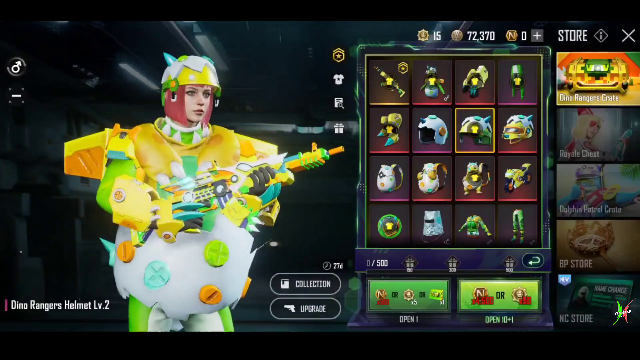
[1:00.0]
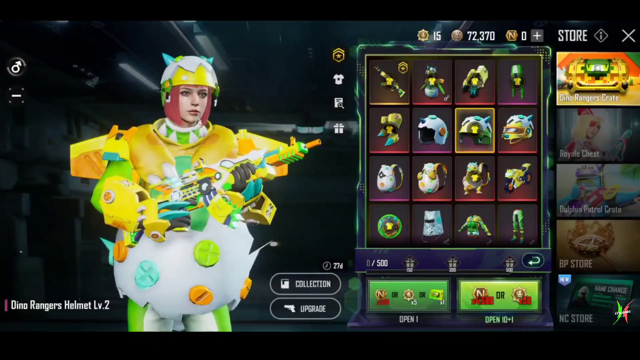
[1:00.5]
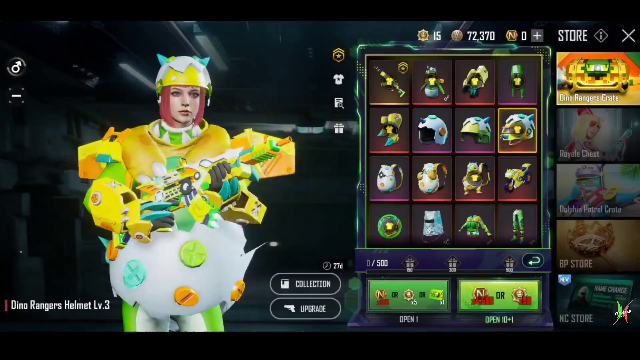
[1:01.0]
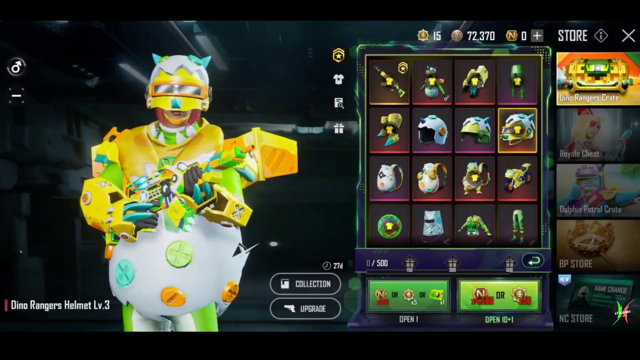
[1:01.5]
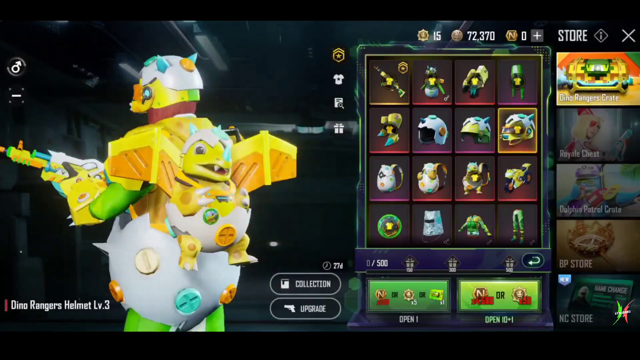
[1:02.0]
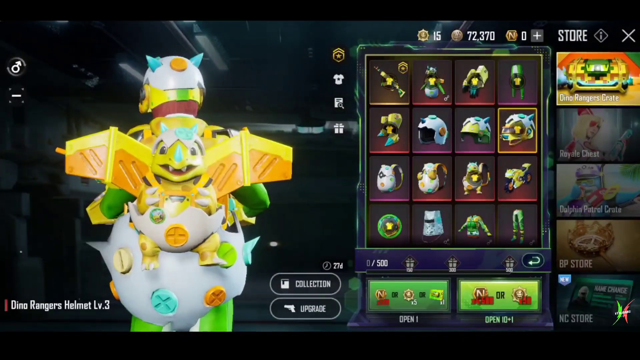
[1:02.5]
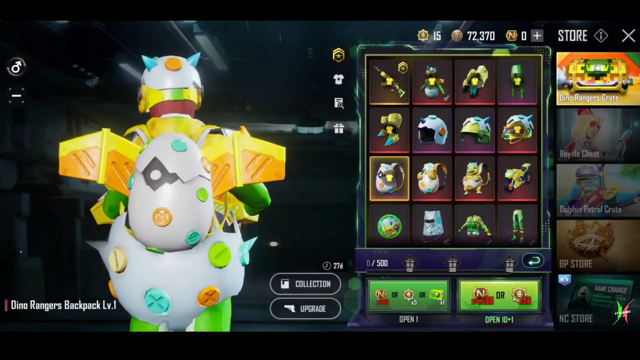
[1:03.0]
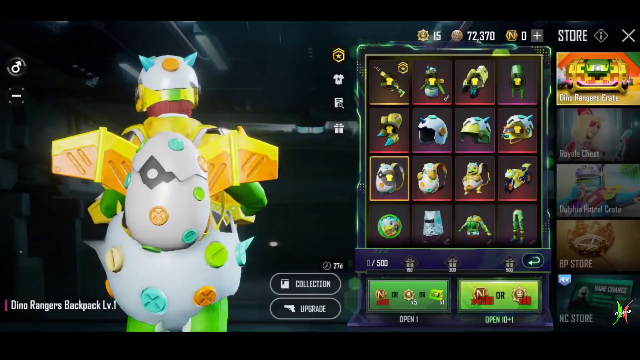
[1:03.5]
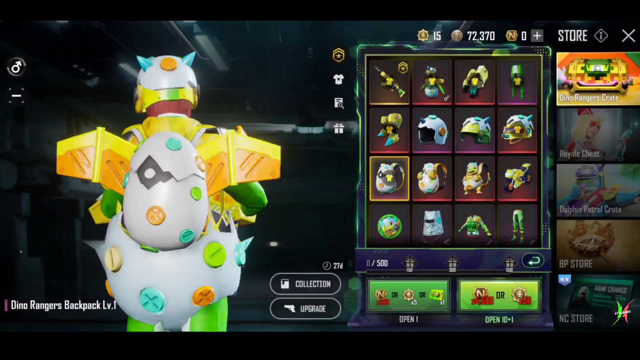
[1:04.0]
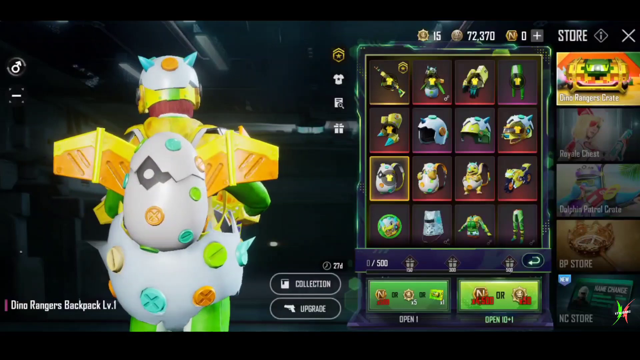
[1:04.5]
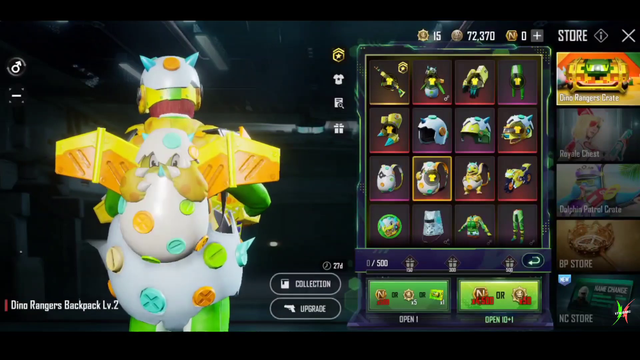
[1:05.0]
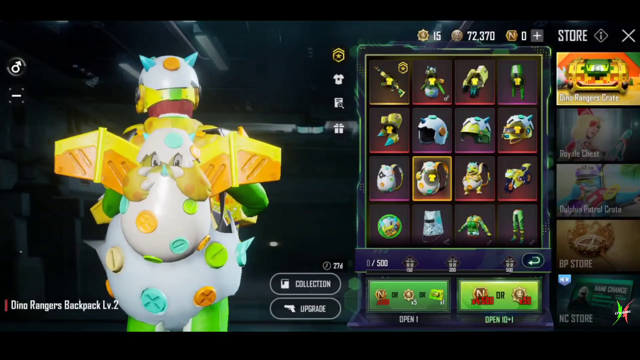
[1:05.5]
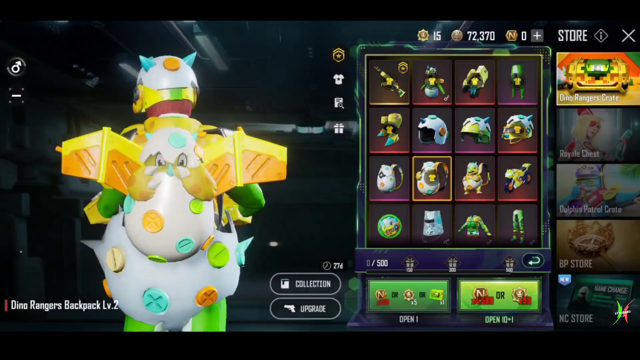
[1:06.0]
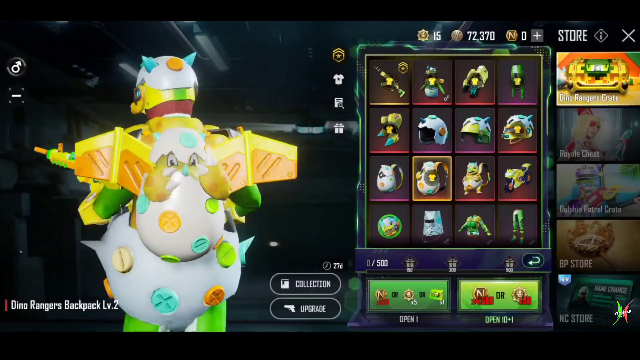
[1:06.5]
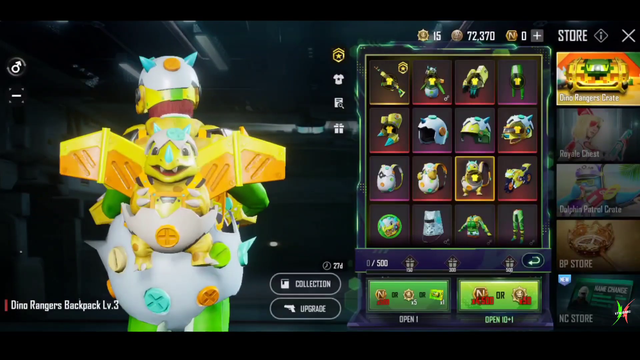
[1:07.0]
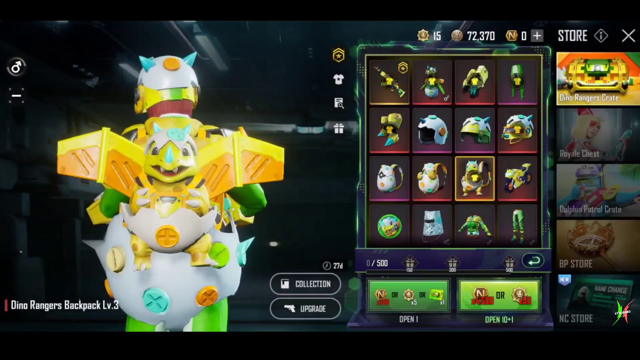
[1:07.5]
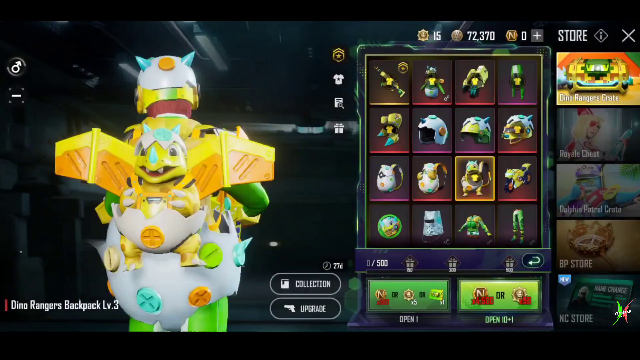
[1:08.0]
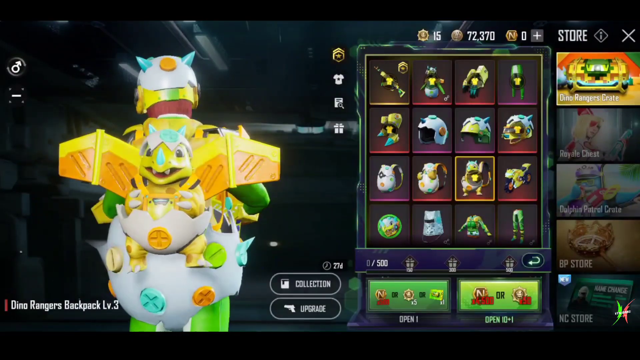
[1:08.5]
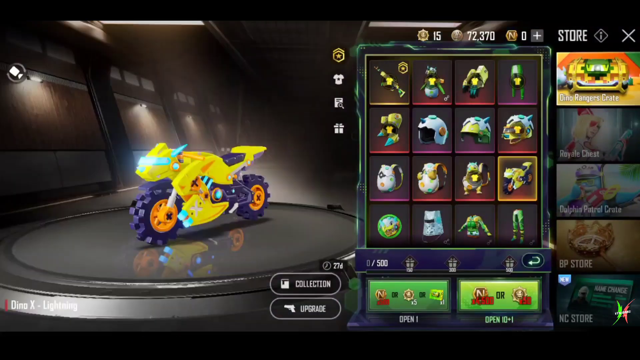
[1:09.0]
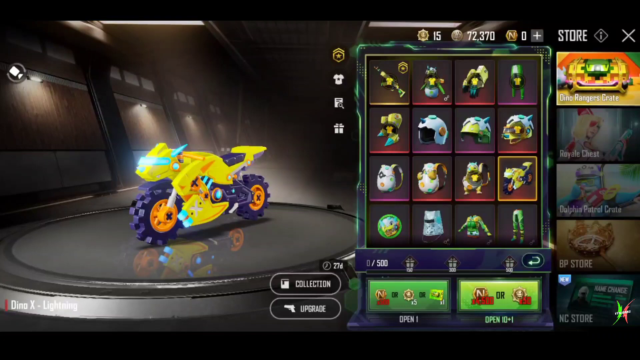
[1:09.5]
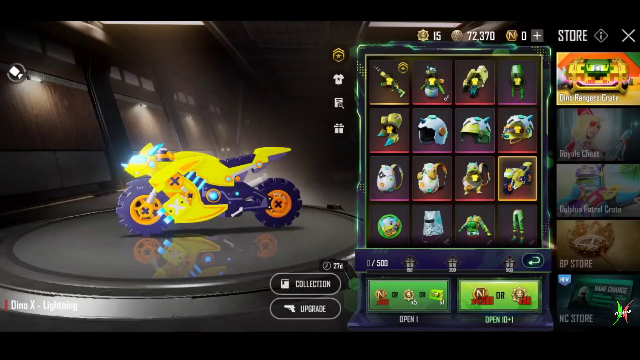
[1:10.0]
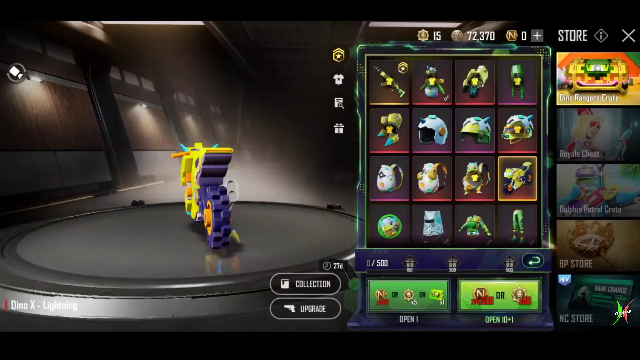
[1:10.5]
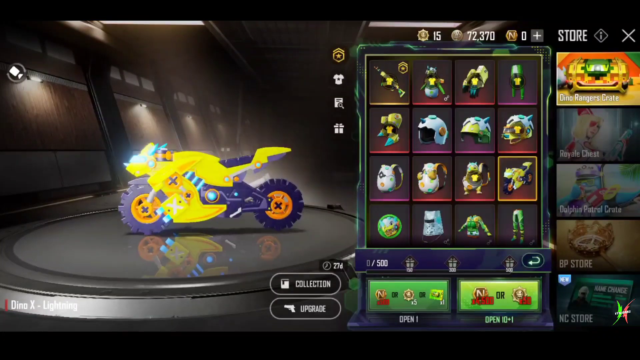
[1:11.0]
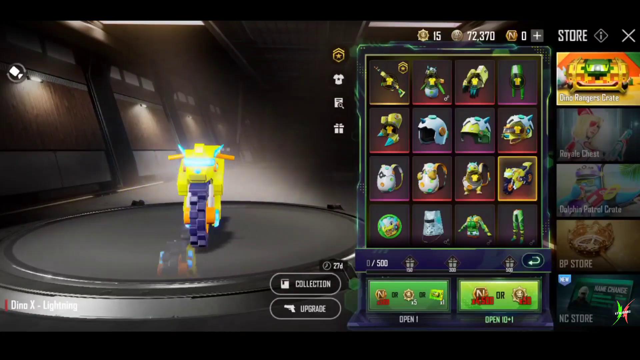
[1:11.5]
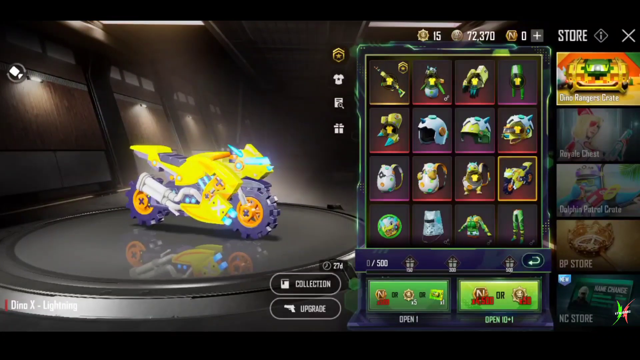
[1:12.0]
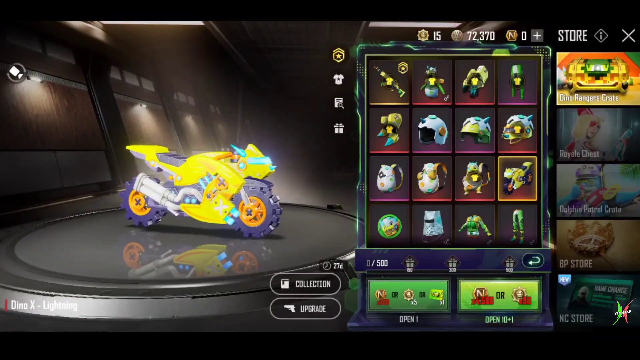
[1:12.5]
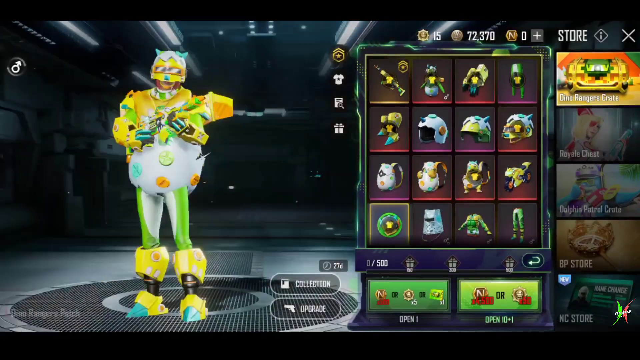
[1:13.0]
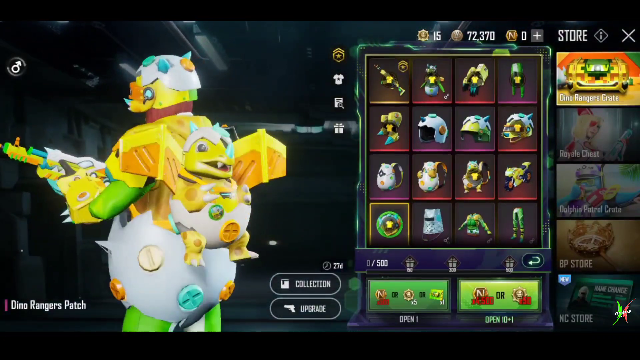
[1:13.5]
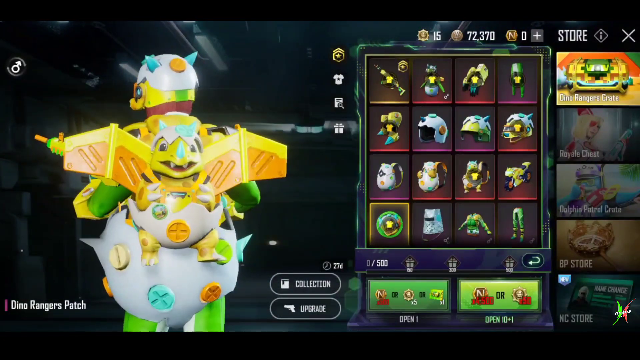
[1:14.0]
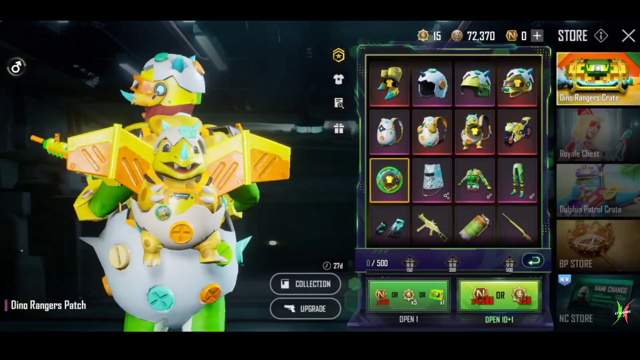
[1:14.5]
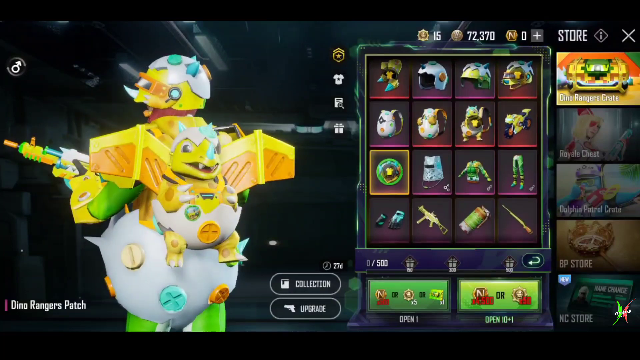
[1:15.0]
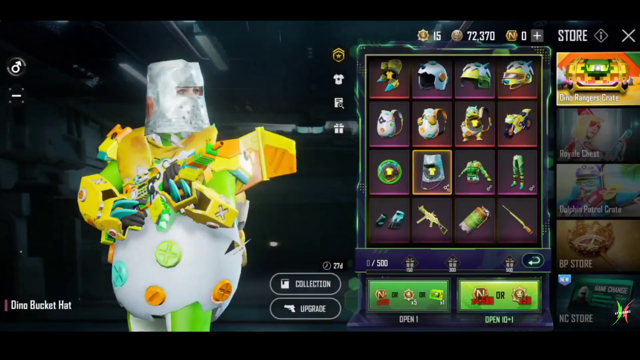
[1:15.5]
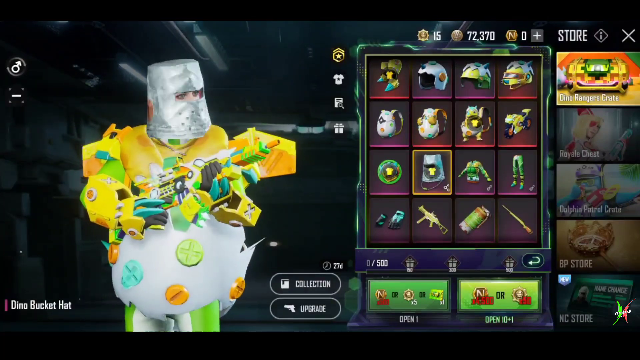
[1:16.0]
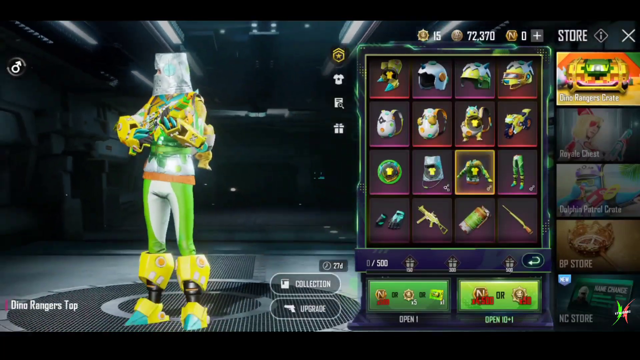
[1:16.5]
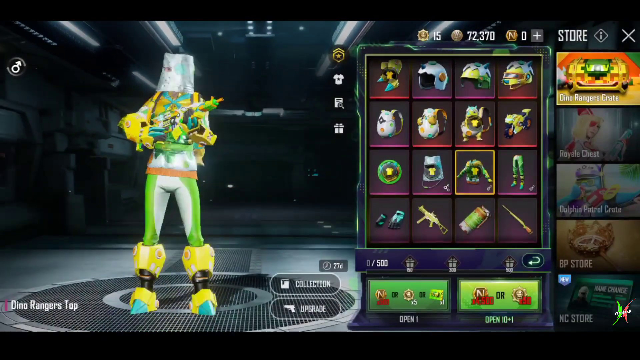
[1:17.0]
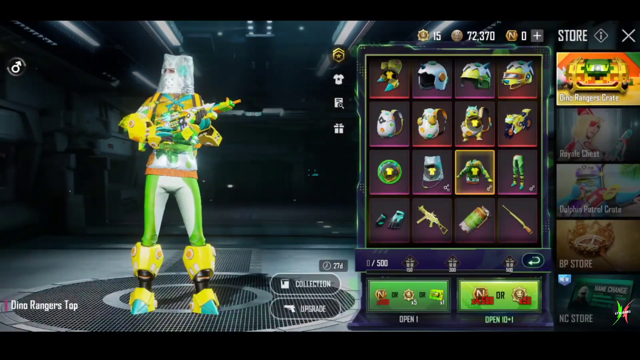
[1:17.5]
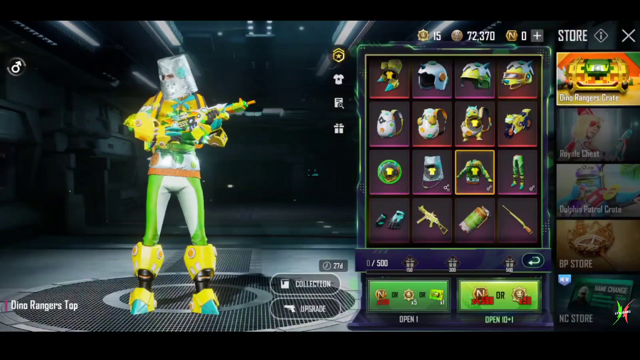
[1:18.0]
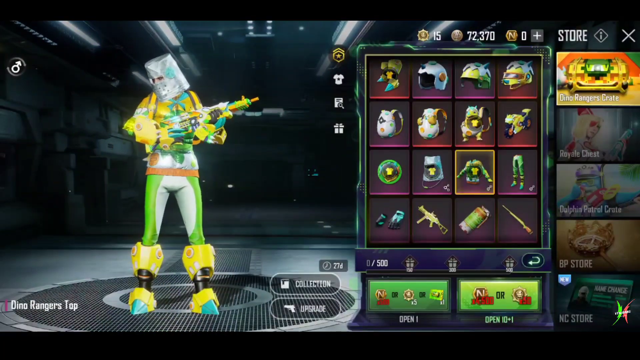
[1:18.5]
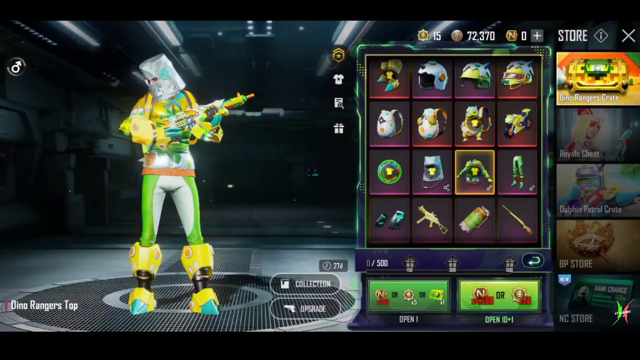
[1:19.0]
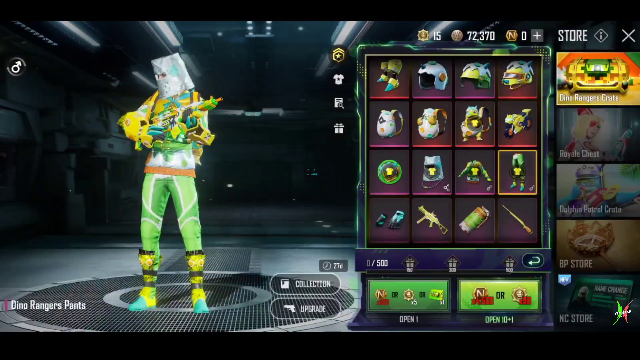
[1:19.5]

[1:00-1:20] The player continues looking at each item. The first backpack is shown, egg-shaped and all white, with what appears to be an eye inside. Buttons run all around the armor plates on the body and the bottom half. There are X-shaped buttons in purple, teal, orange, white and green, and negative signs or pluses in aqua, purple, green, white and orange. Viewed from the individual's back, they are also wearing a helmet. Then what appears to be a motorcycle is shown, with neon-like lights in the front and purple wheels that are almost Lego-like; its body is a mixture of yellow and purple.